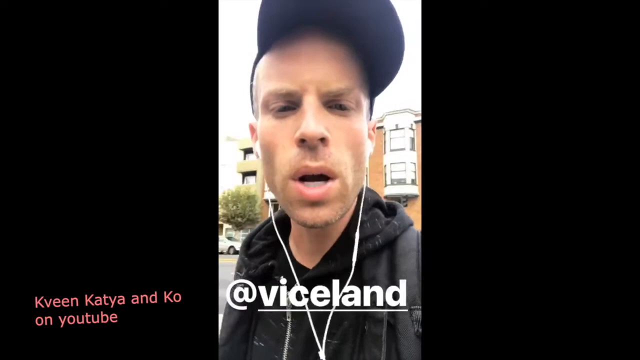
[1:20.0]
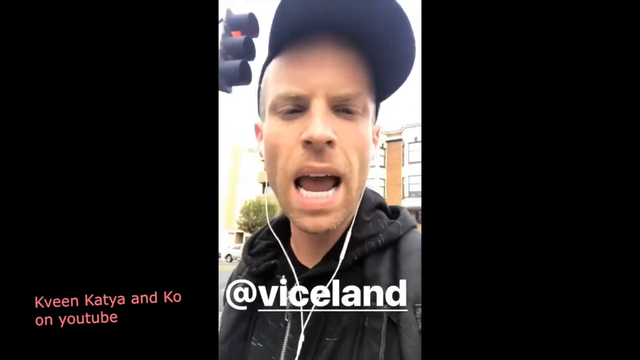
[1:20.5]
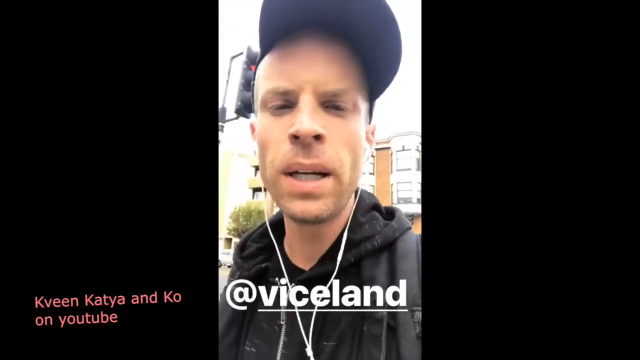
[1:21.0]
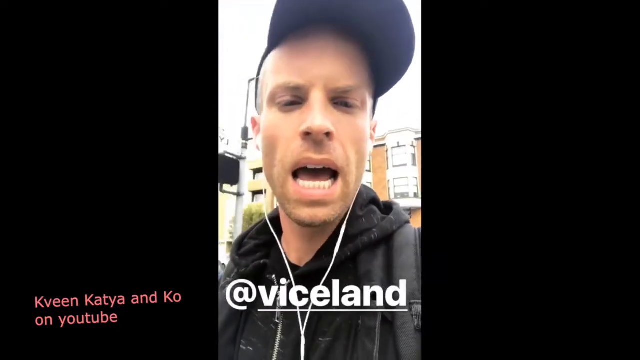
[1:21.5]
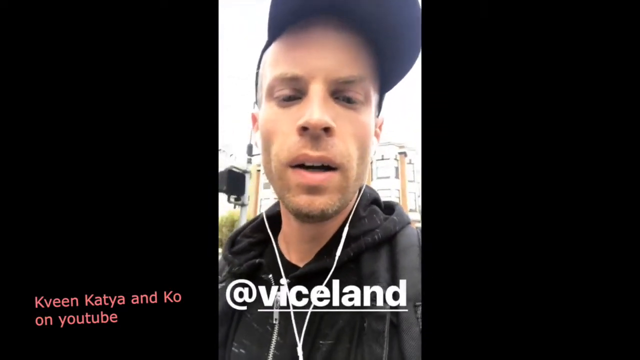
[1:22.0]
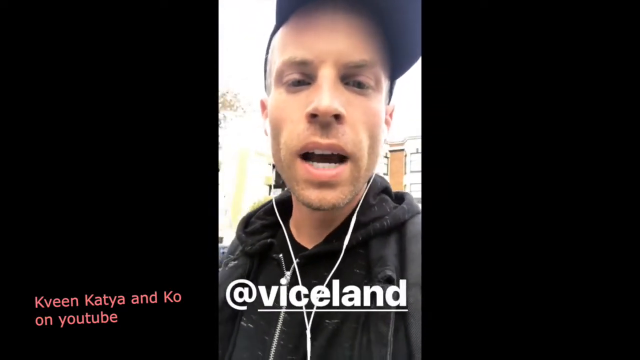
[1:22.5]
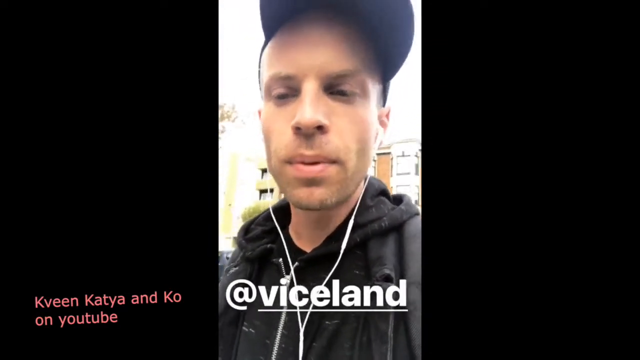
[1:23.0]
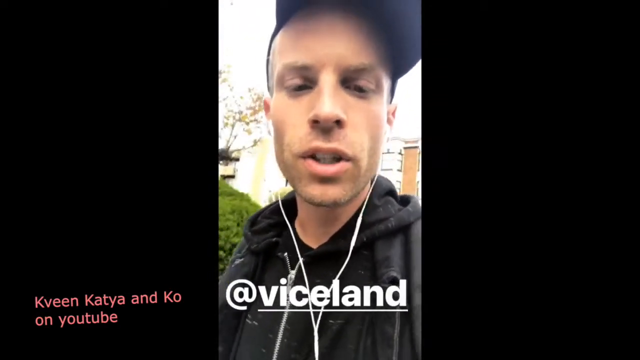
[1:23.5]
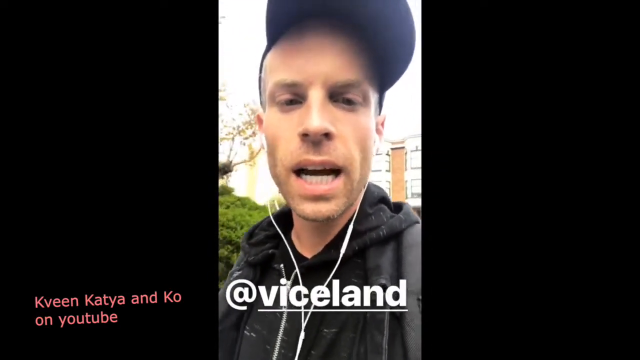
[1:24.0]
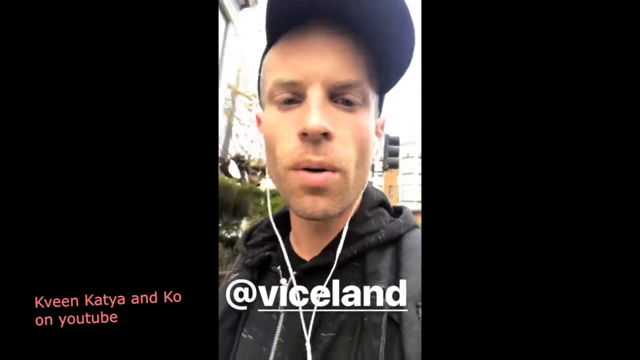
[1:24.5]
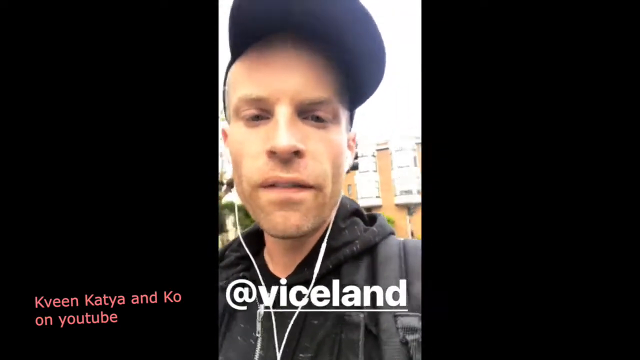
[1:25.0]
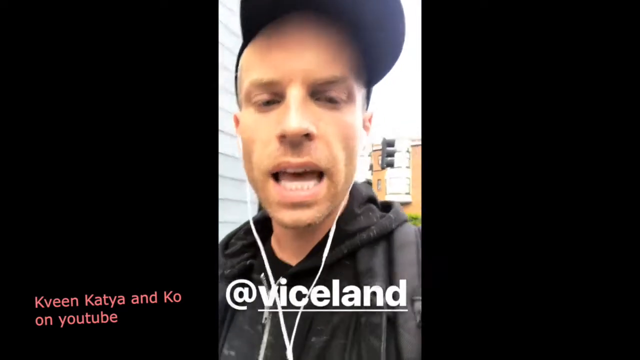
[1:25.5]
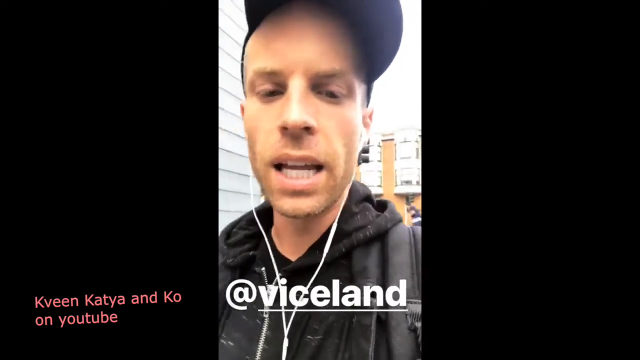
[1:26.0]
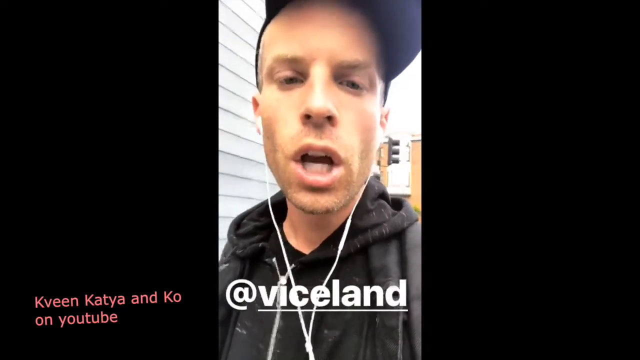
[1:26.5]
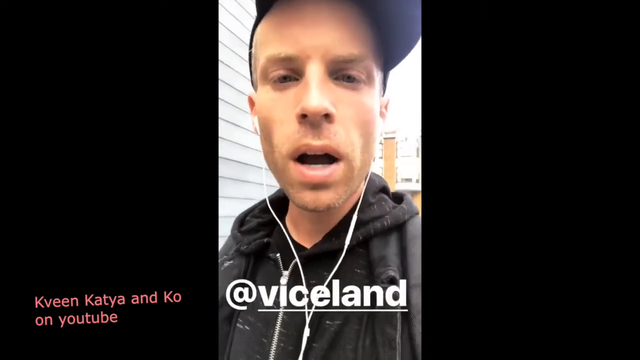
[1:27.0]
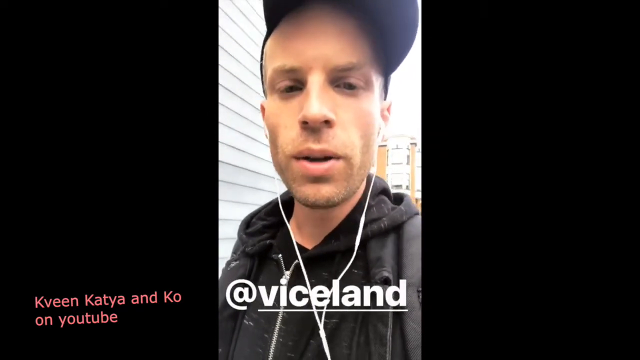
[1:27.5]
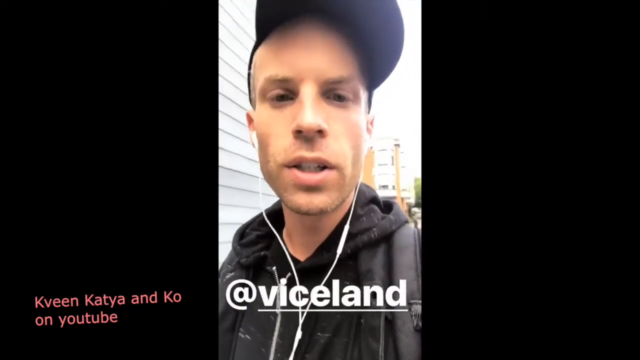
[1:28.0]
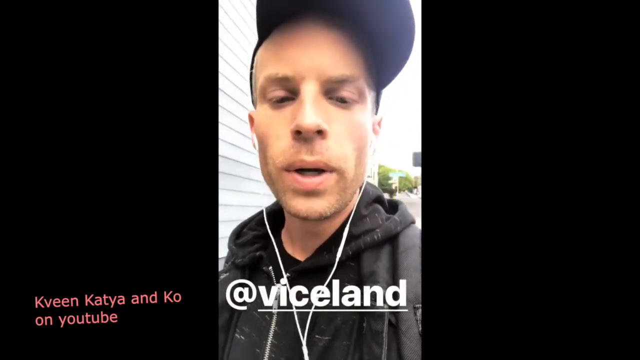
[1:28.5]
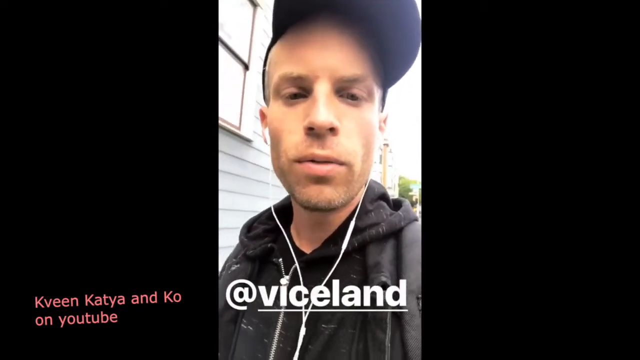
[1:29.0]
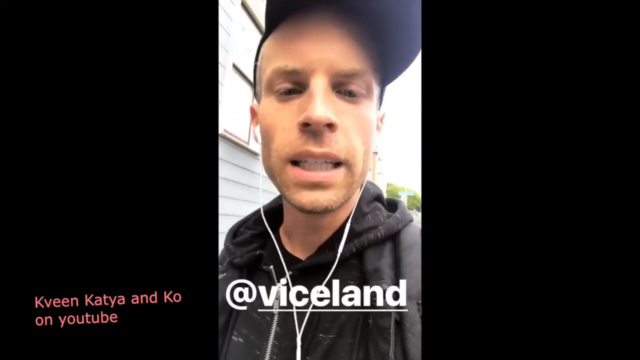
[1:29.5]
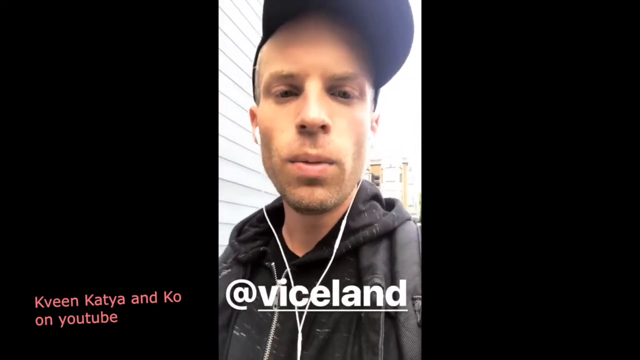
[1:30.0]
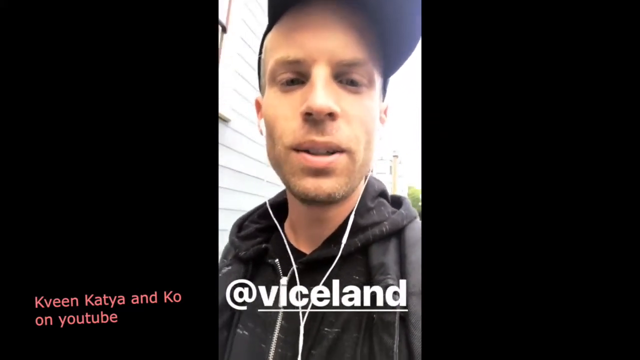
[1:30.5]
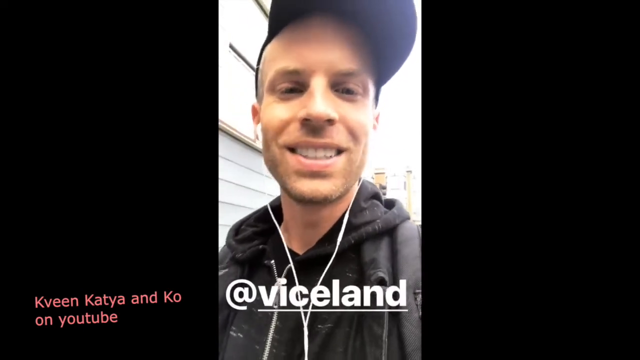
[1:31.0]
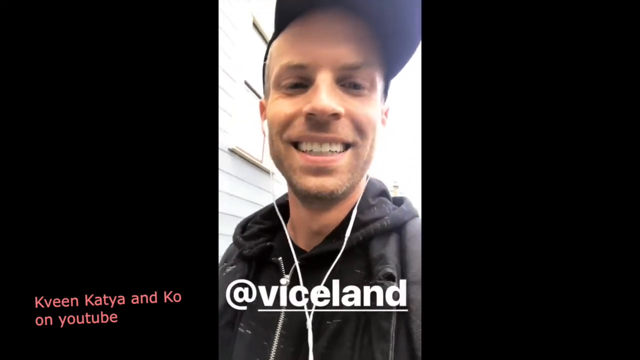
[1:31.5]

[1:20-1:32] A man walks outside, videoing himself as he walks, with added words that say "at Viceland". He talks and smiles as he walks, probably down a sidewalk, and goes past a red light and a traffic light. The video is long and skinny, probably done on a phone, with a black rectangle on the left and a black rectangle on the right, outside the video itself. In the lower left-hand corner, names read "Kveen Katya and Co.", spelled K-V-E-E-N.